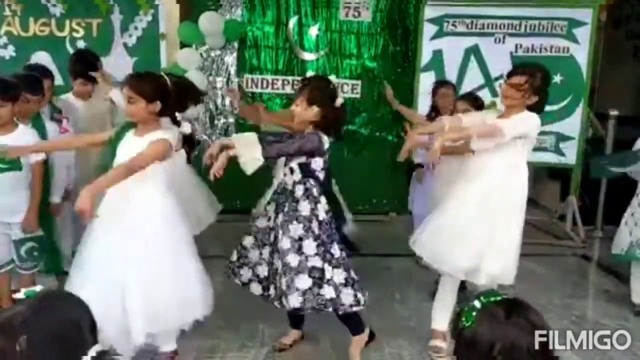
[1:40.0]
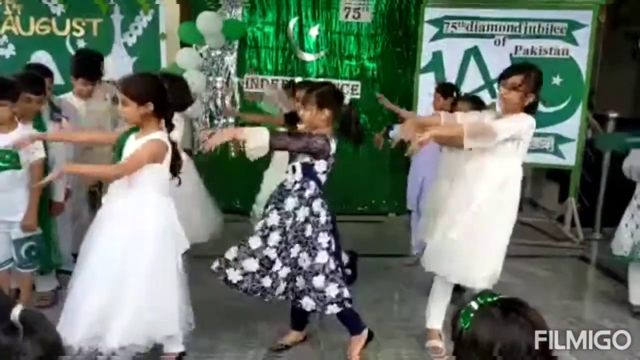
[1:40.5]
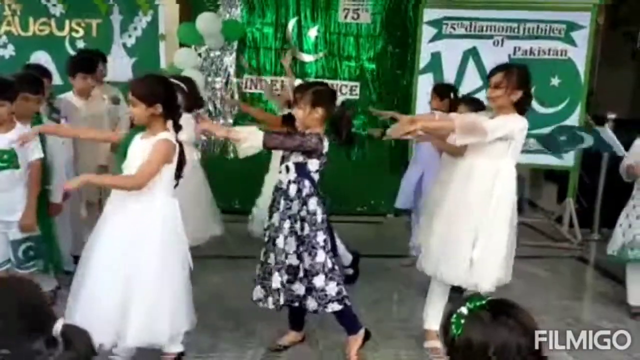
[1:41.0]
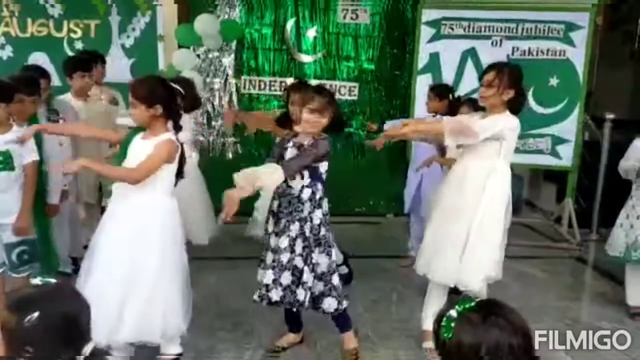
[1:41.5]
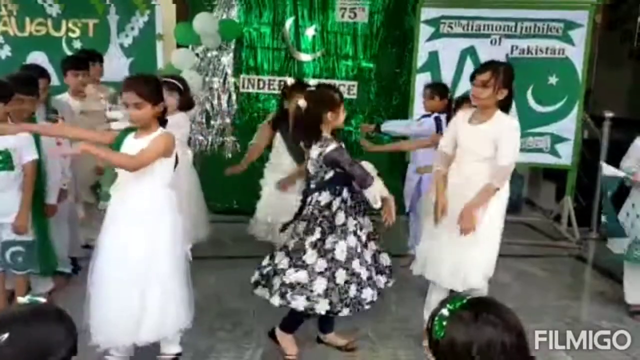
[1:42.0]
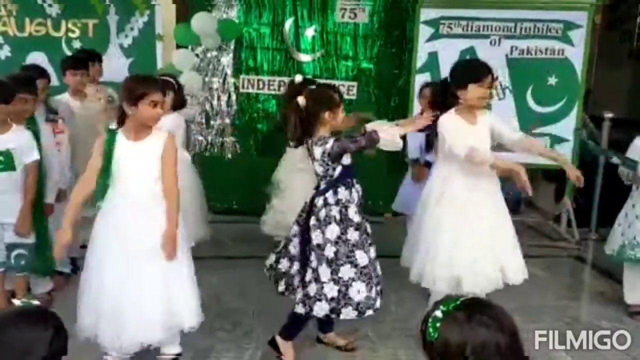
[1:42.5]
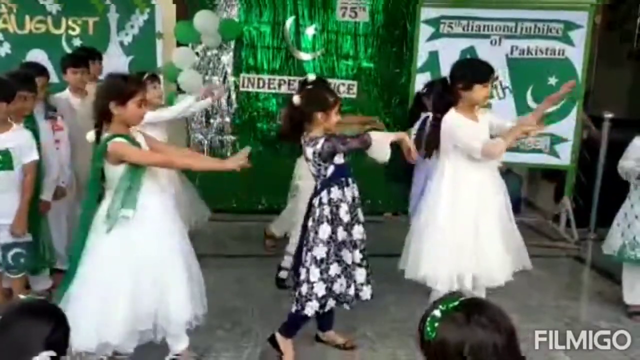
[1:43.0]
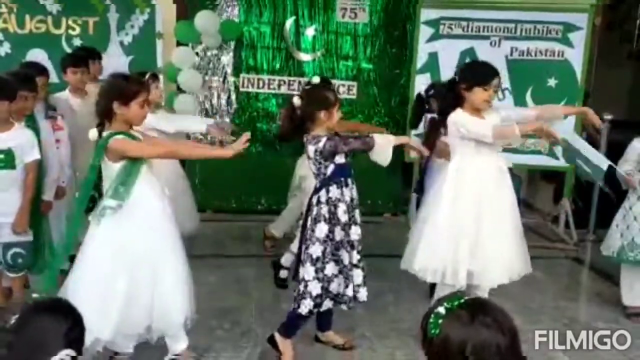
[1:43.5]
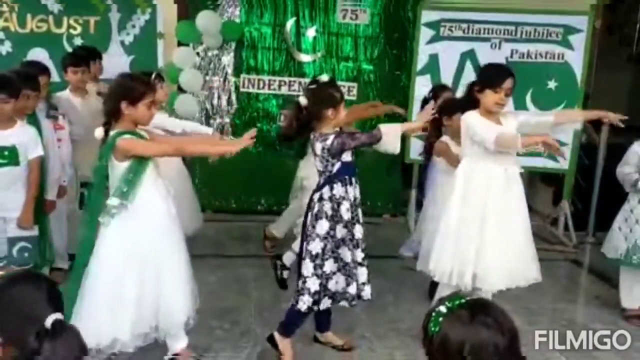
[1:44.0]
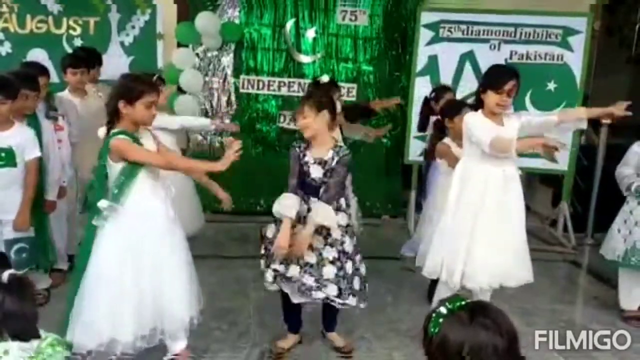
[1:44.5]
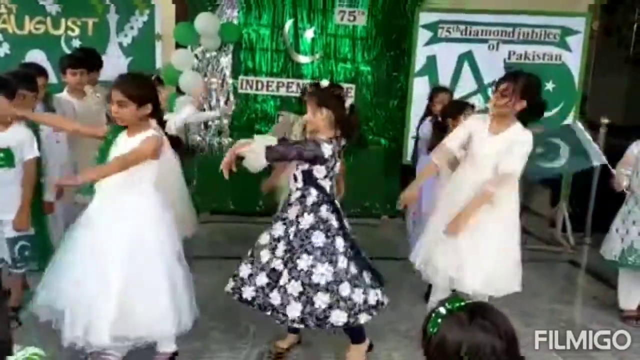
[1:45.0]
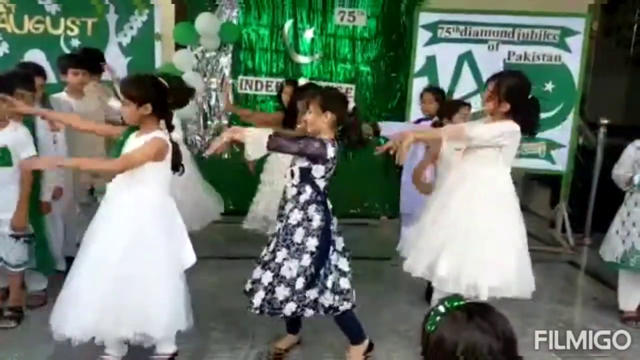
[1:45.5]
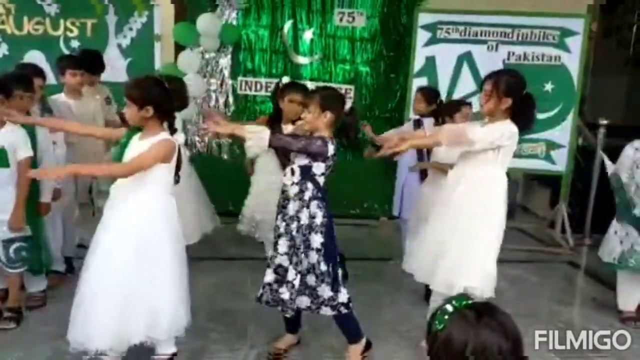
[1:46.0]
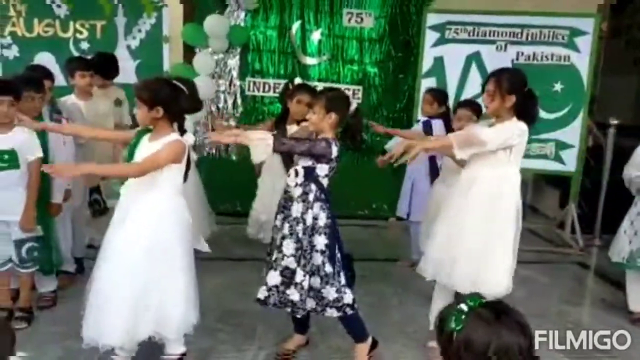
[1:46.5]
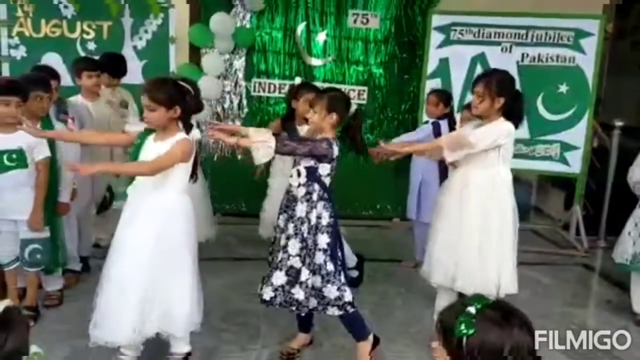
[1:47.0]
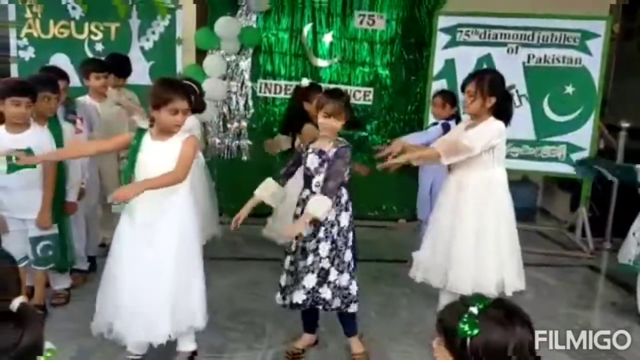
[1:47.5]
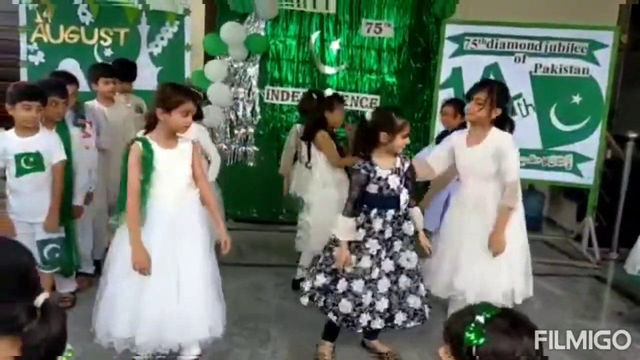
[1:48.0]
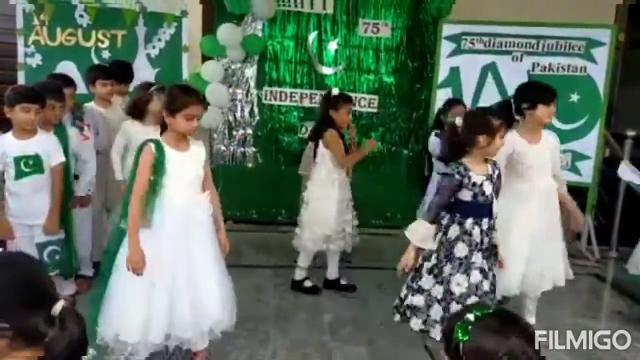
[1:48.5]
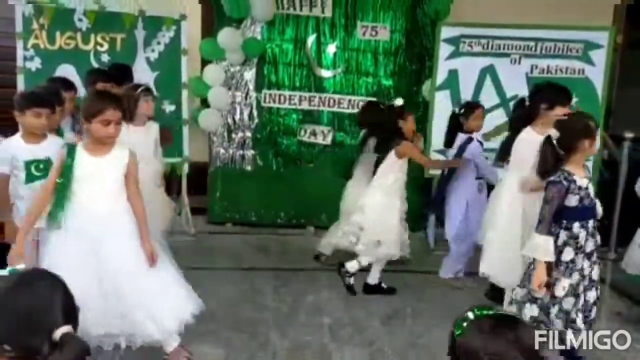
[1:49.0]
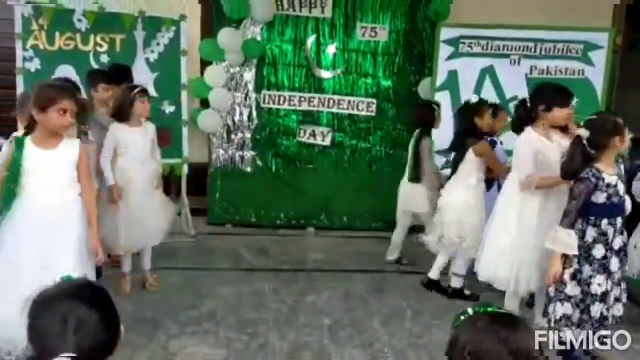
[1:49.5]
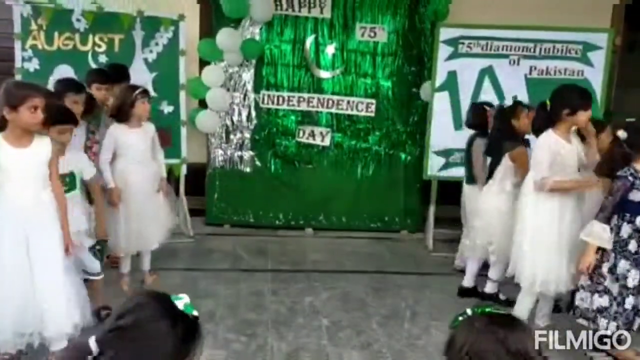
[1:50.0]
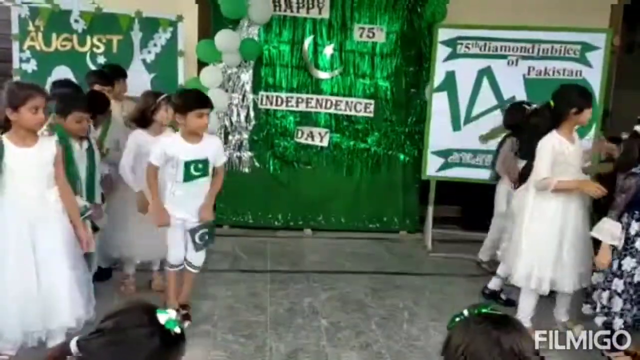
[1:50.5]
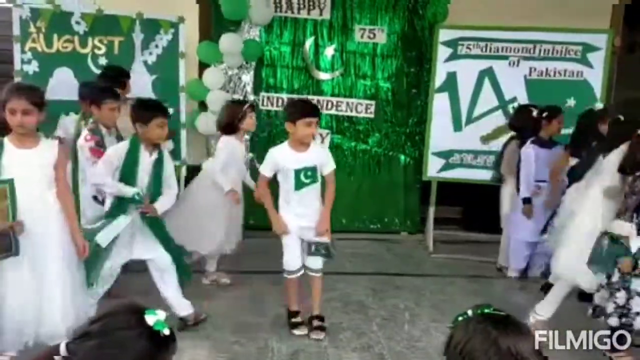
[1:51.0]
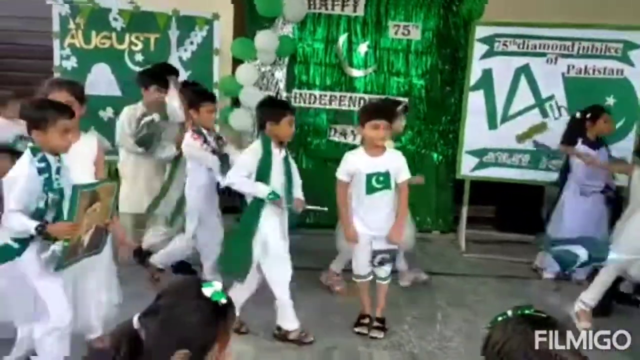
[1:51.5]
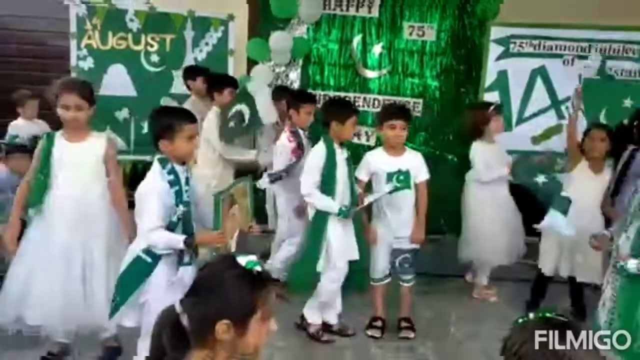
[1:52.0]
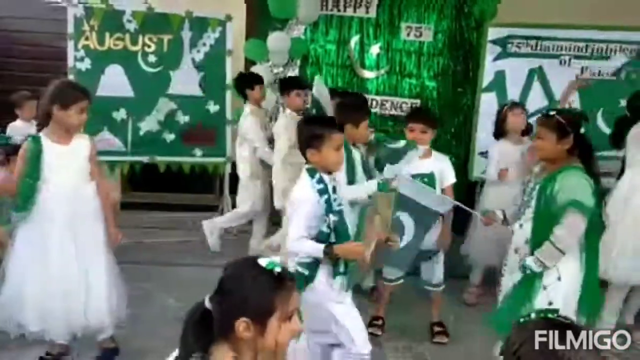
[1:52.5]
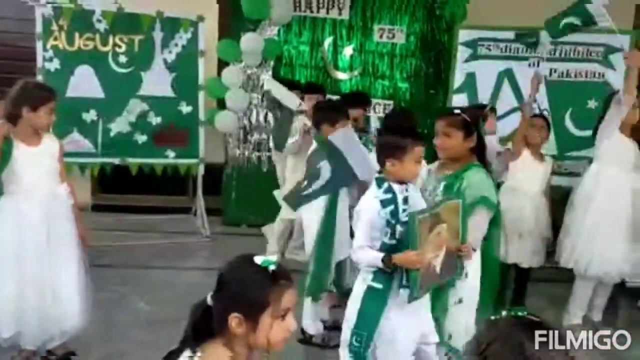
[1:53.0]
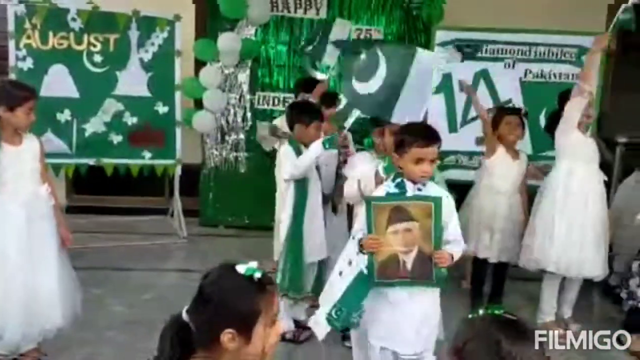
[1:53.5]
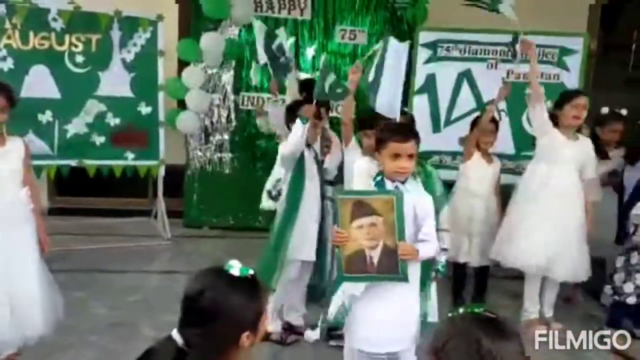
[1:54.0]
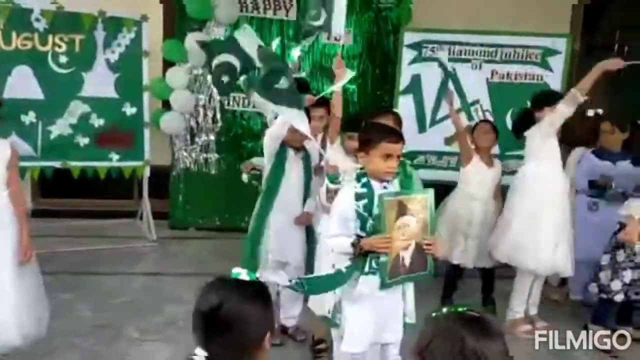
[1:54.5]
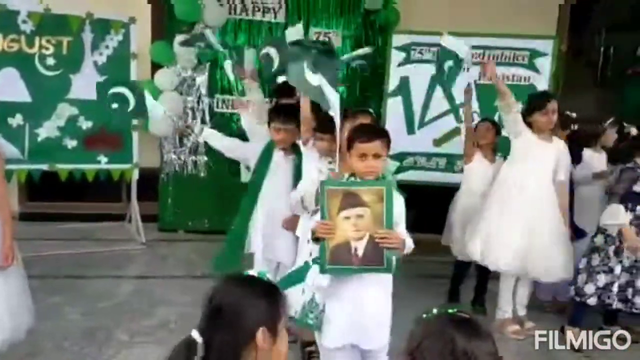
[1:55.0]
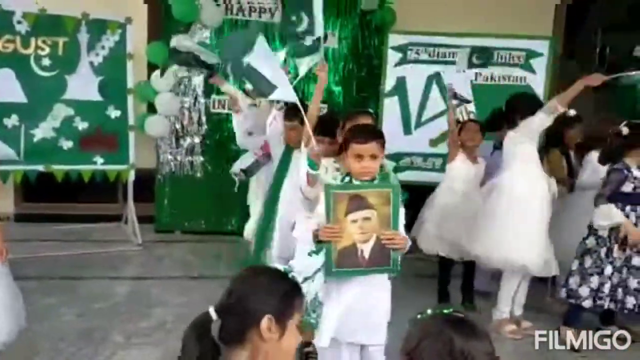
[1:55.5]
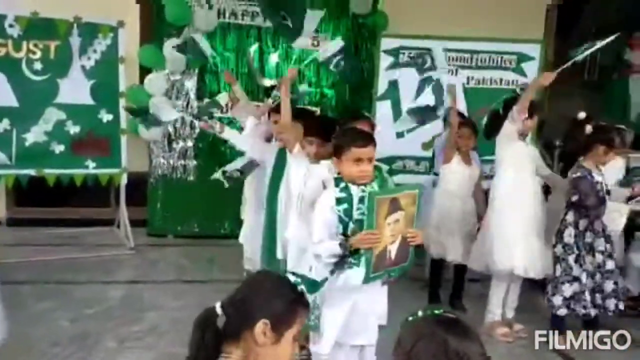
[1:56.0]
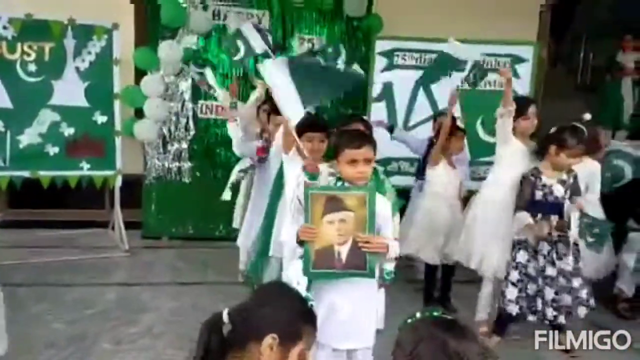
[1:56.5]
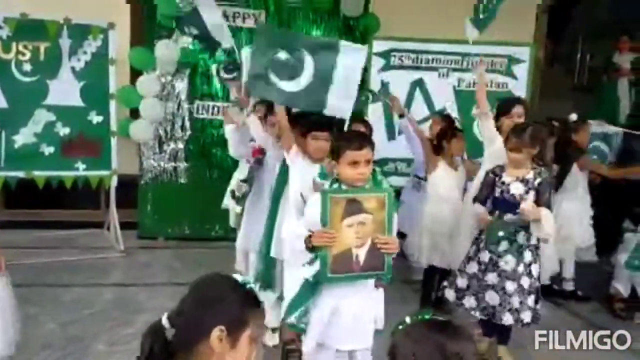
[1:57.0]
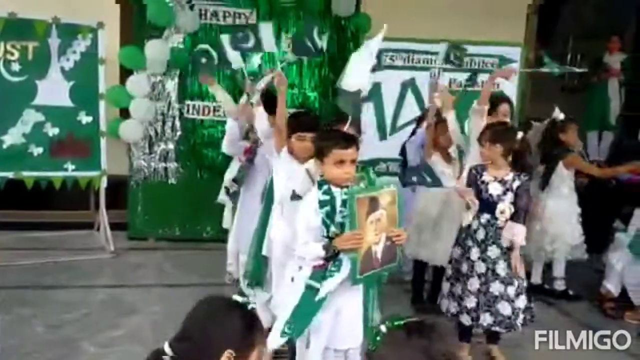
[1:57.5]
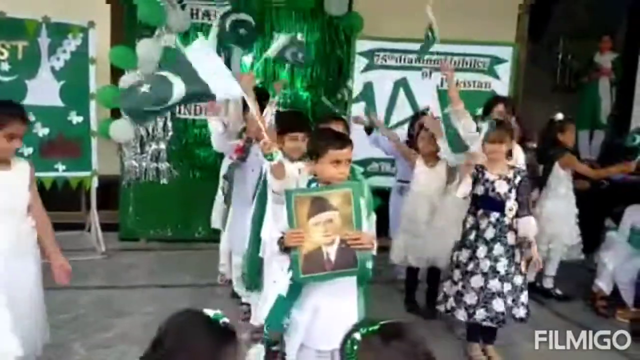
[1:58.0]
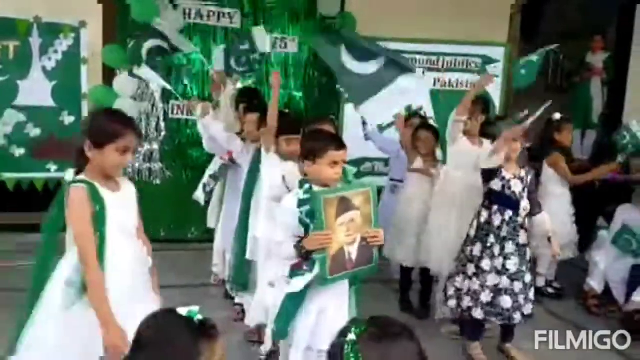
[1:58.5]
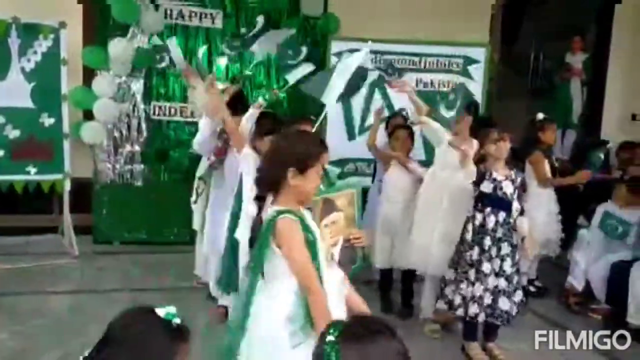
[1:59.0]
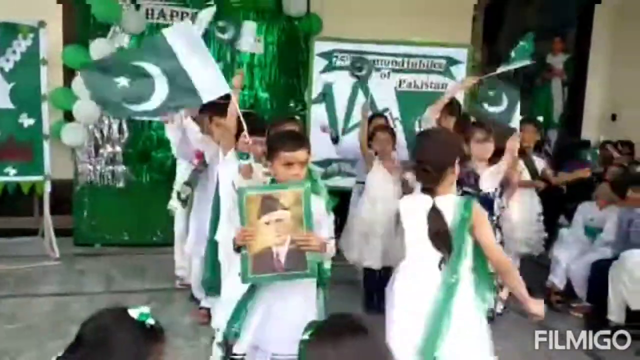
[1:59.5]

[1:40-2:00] The group of 12 girls keeps dancing with the same arm-waving moves. The other rows are hard to see, but they seem to mostly wear cream-colored dresses, and one girl wears a periwinkle blue dress. The girls then move to the left and right, and the boys and the girl waving the flag come back. They stand in a single file line with the boy holding up the picture at the front, all waving Pakistani flags, and seem to move a bit back and forth. In the crowd, one of the girls sitting at the front has a green and white bow, and the girl to her left has a similar bow with more white. On the left-hand cardboard stand, besides the word "August," there is a green background, a Pakistani flag symbol, a paper cutout of some kind of building, and butterflies.